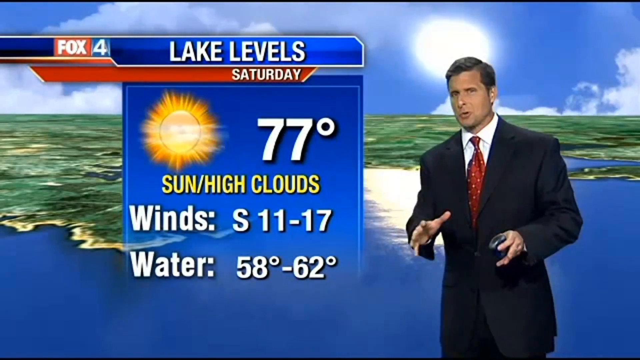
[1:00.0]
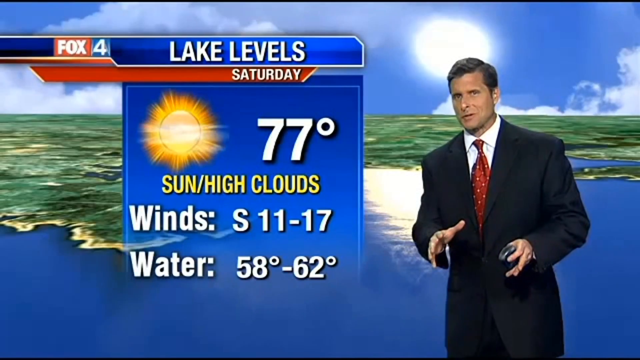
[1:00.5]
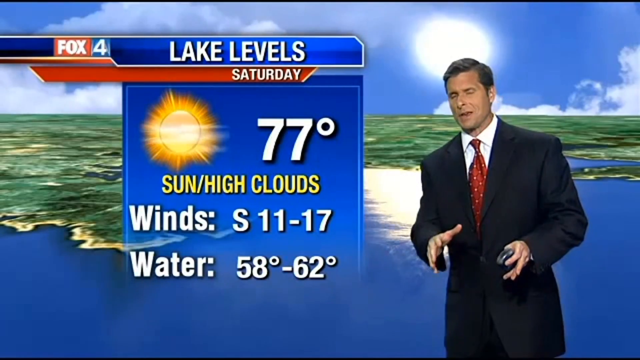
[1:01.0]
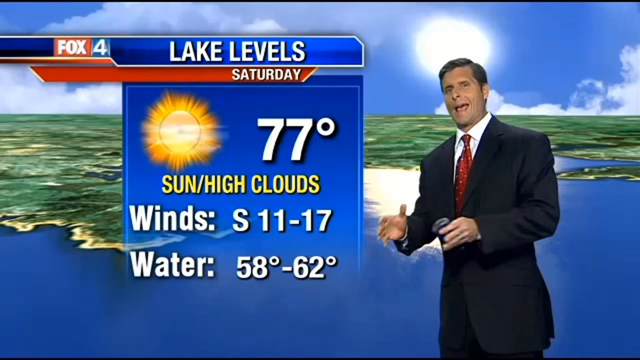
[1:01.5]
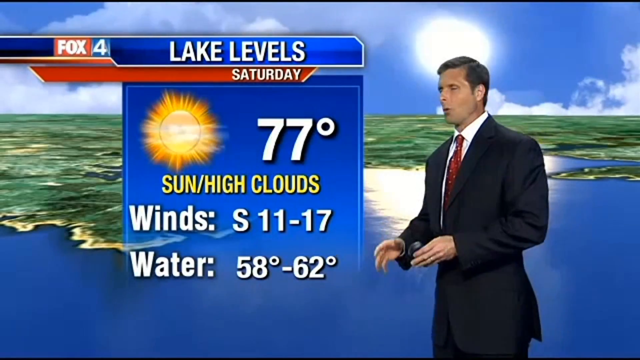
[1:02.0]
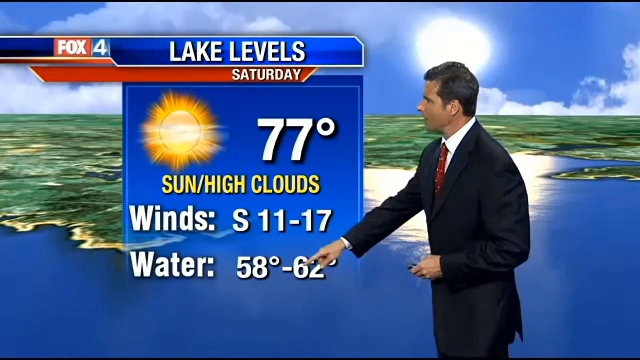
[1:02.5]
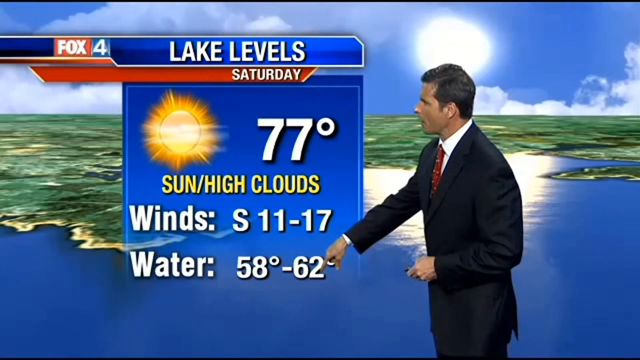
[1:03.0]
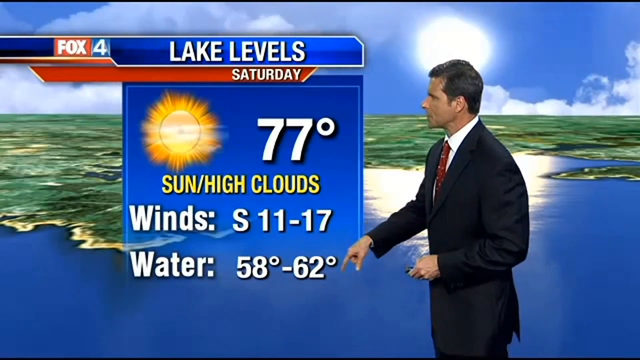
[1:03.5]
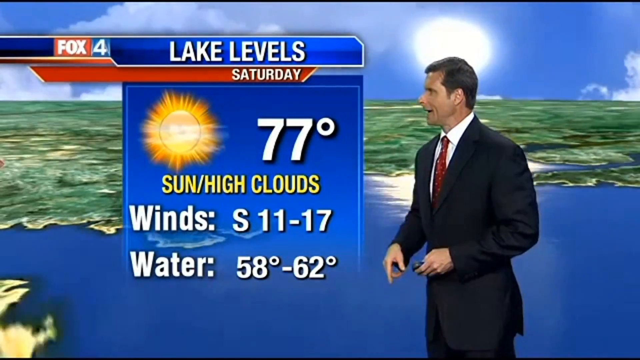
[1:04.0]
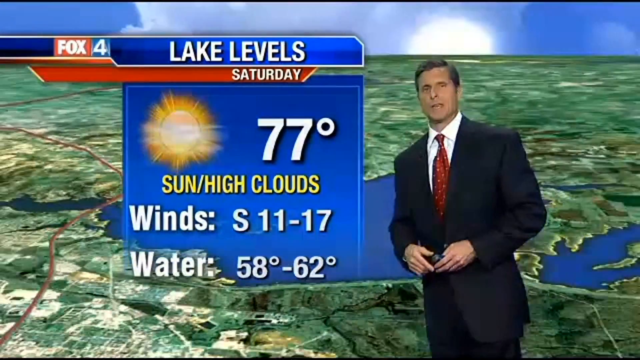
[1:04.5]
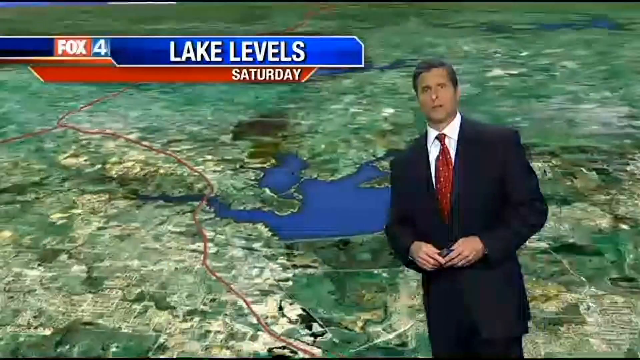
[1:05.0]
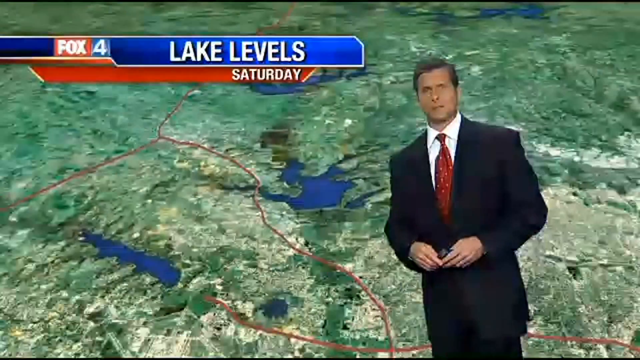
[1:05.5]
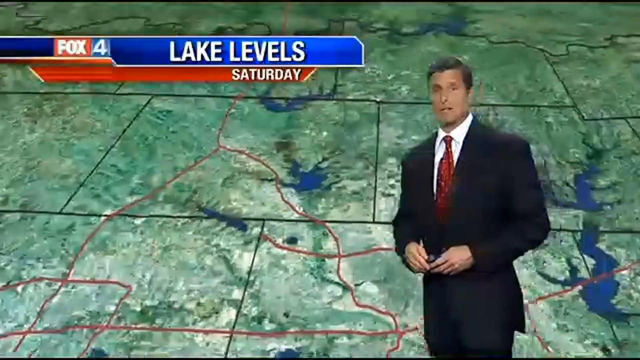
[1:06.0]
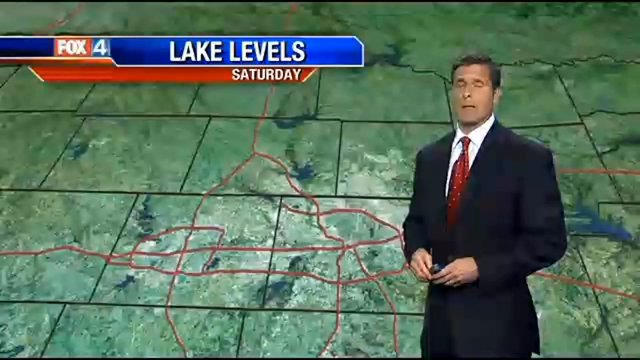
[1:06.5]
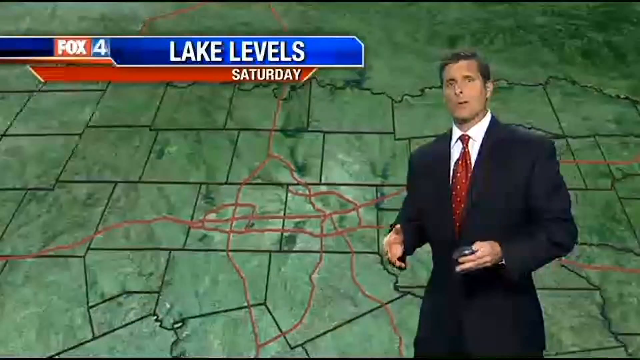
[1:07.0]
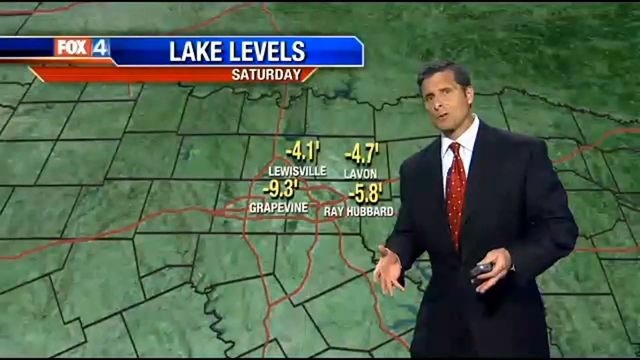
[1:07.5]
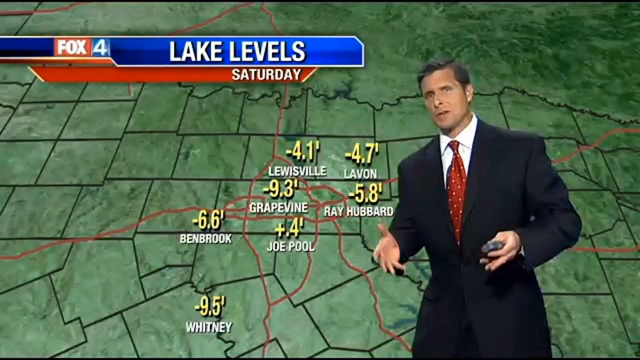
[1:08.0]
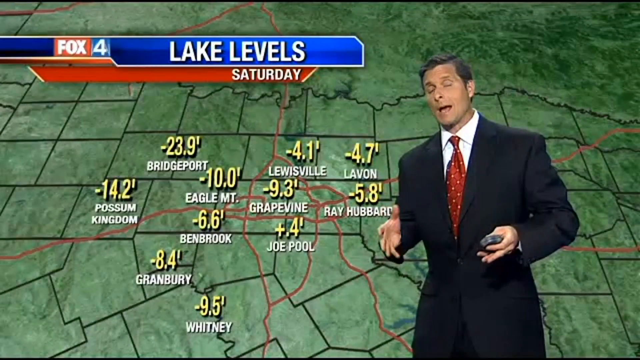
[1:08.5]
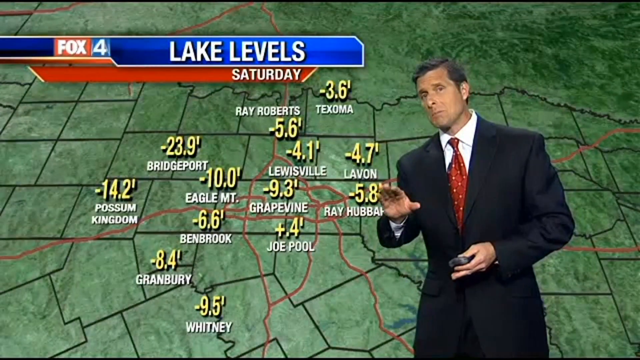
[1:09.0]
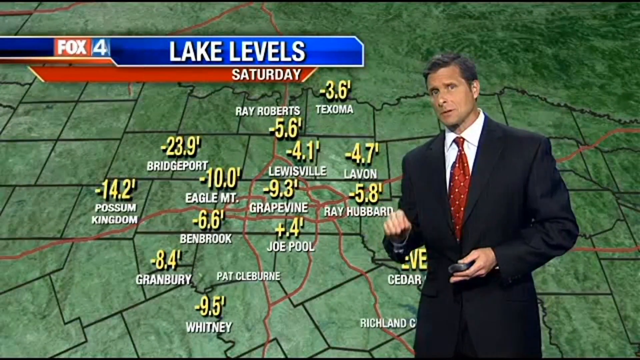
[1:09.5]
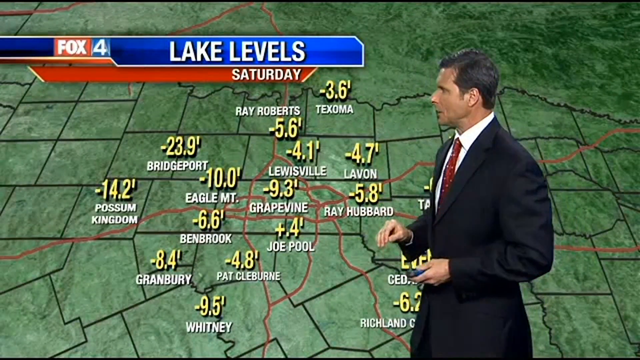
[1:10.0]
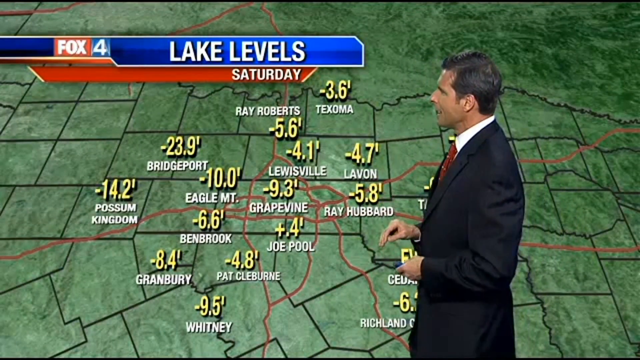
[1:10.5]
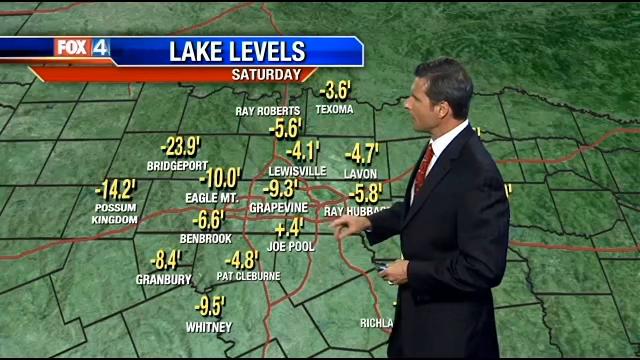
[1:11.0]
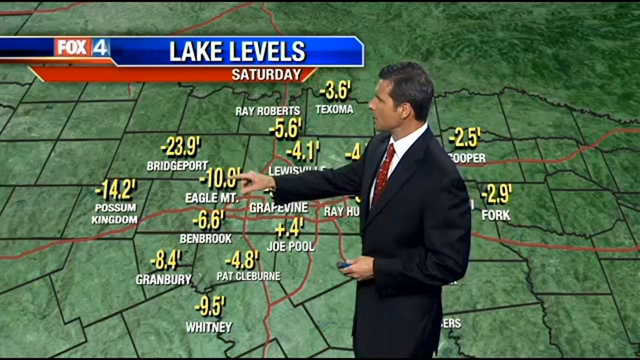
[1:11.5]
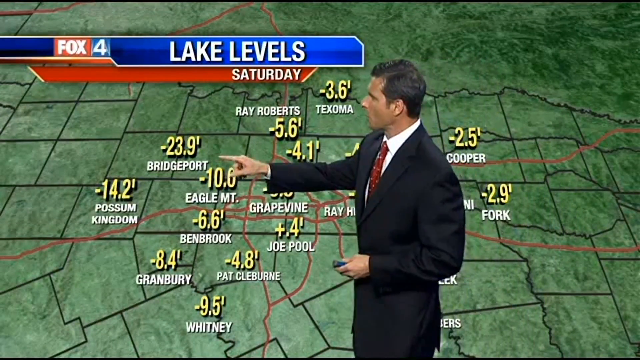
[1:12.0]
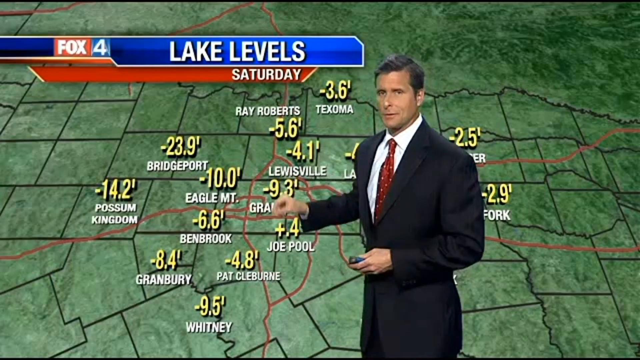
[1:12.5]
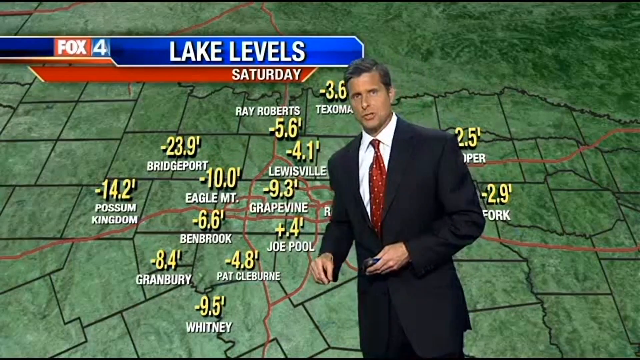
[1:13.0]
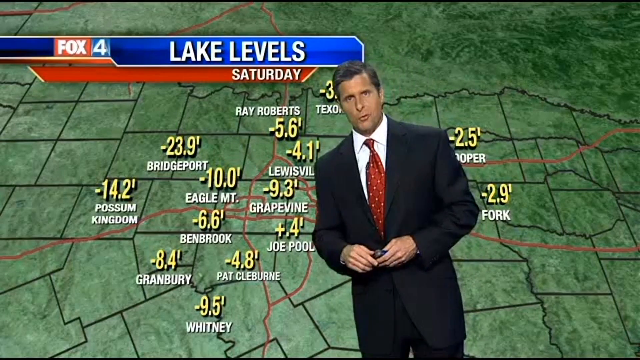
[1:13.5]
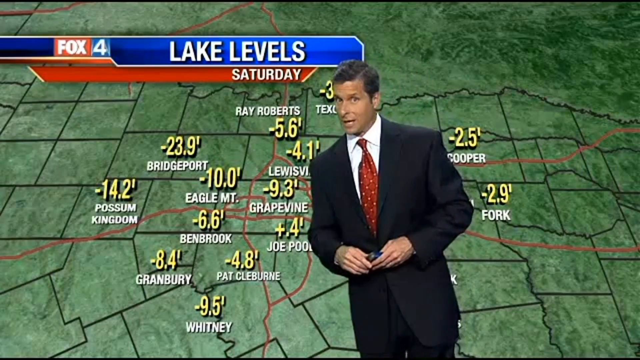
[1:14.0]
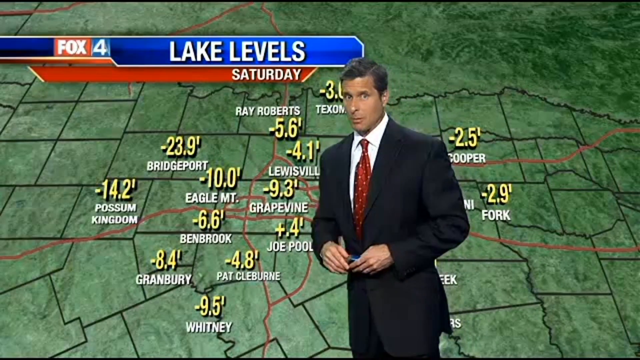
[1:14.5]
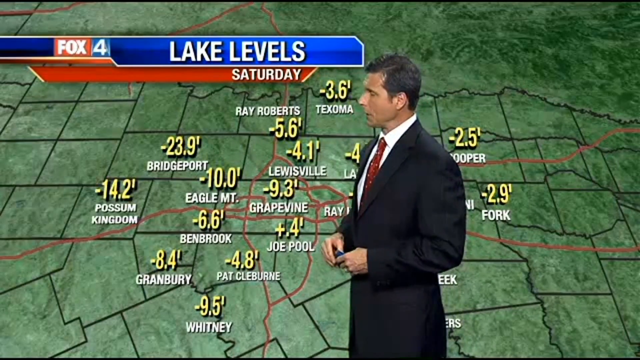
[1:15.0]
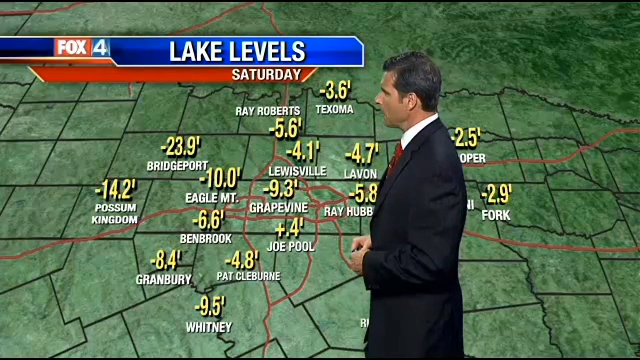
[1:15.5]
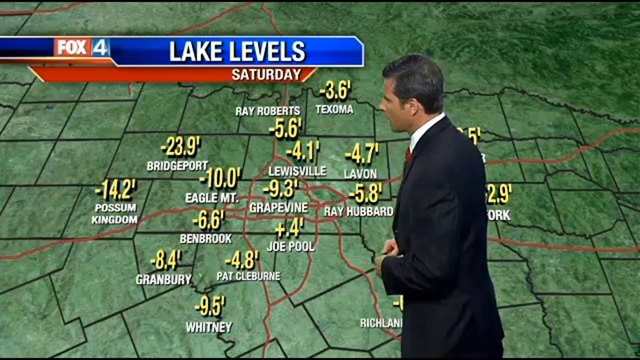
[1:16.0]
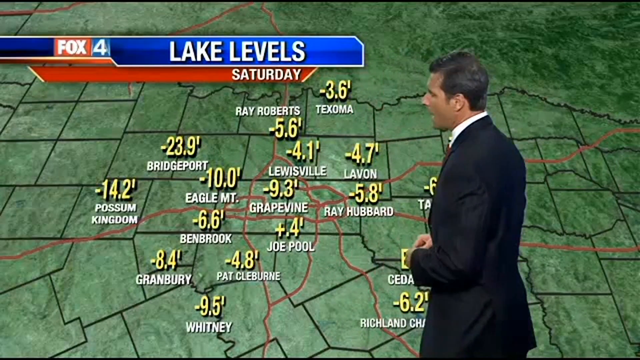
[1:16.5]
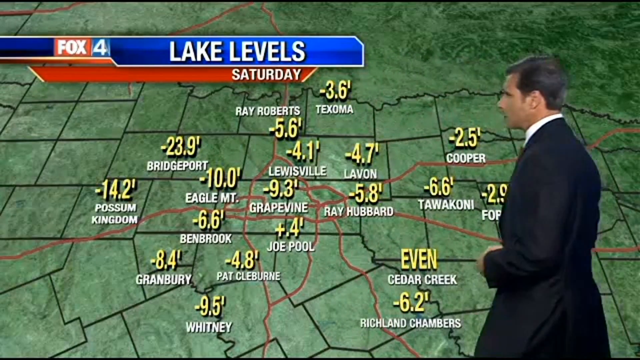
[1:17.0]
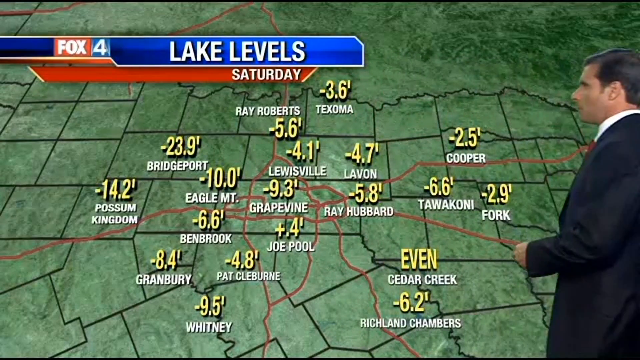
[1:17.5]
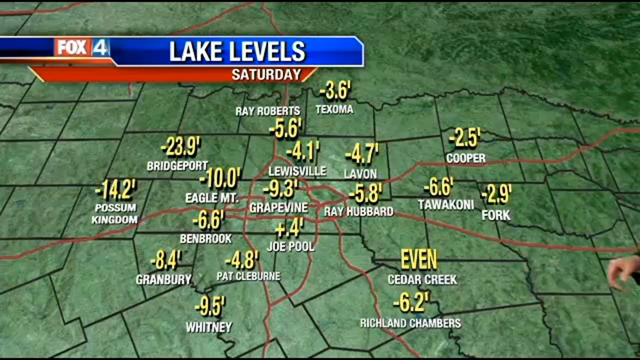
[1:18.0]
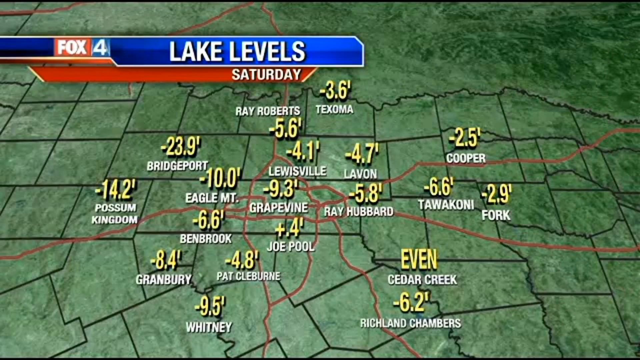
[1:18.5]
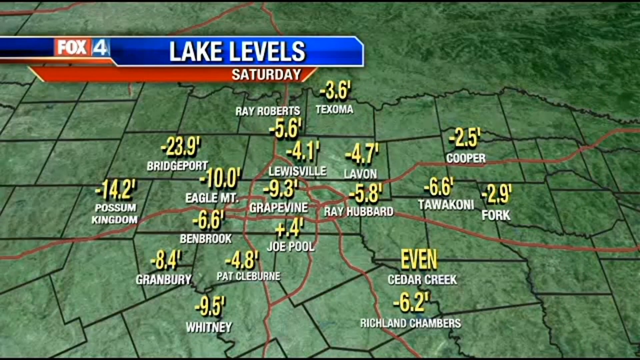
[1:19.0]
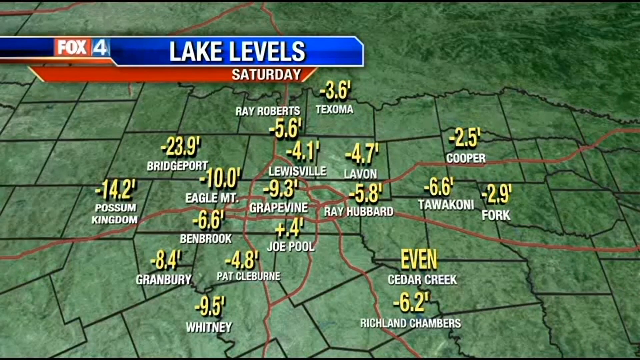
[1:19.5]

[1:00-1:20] A weatherman is on the right side of the screen with a graphic reading "lake levels", with white text underneath reading "Saturday" and an image of the sun below that. On the right side it reads "77 degrees", with white text underneath reading "sun/high clouds". Below that, white text reads "winds:" followed by "S 11" and "17", and under that "water:" followed by "58" and "62 degrees". The graphic disappears and a map forms in the background, showing what appear to be yellow numbers, with "lake levels" and "Saturday" at the top. Then there is pointing at some of the yellow numbers, which indicate the levels of the lakes.